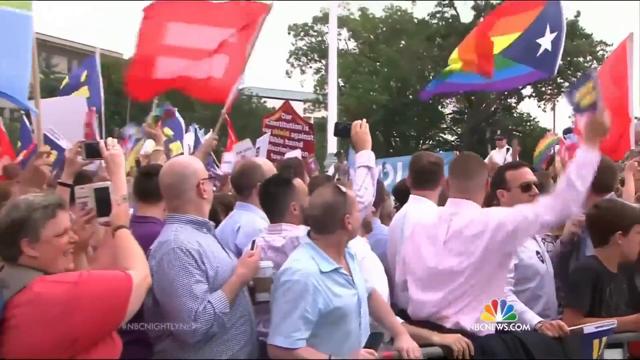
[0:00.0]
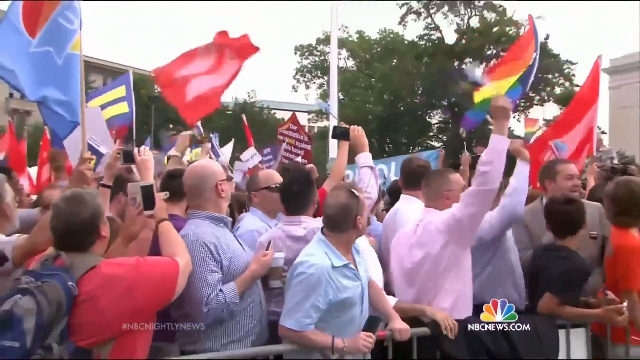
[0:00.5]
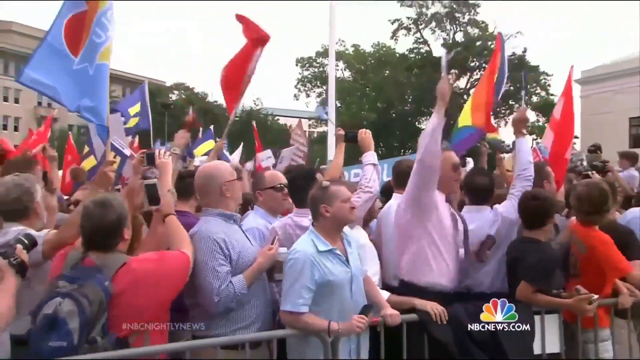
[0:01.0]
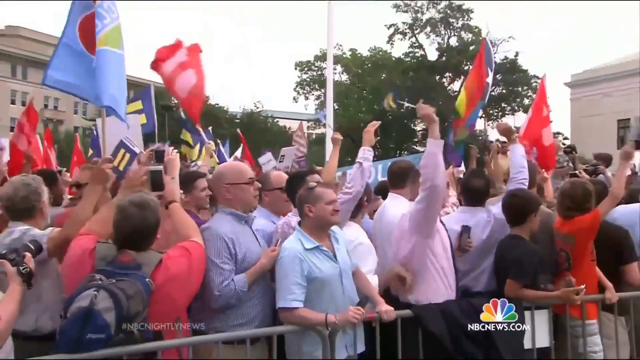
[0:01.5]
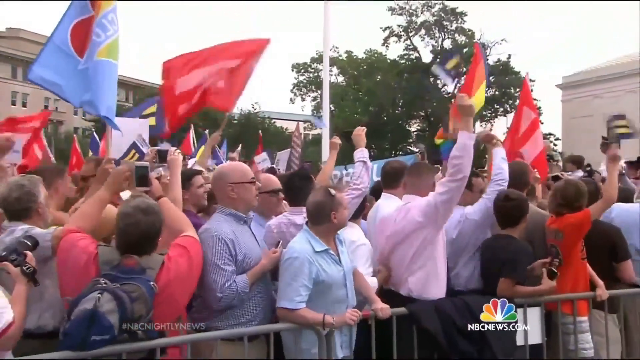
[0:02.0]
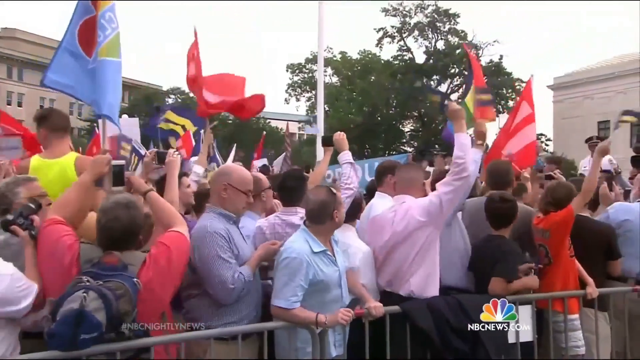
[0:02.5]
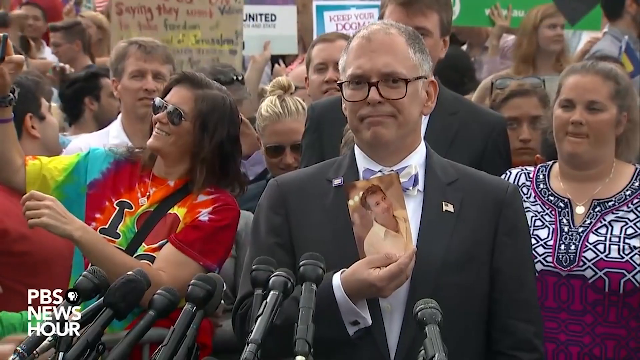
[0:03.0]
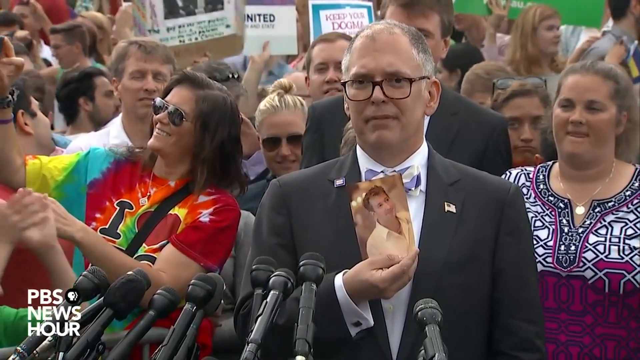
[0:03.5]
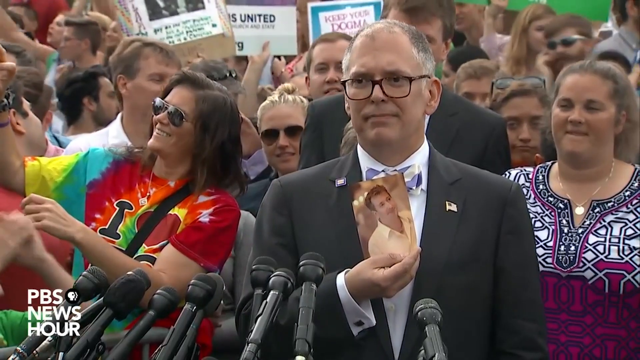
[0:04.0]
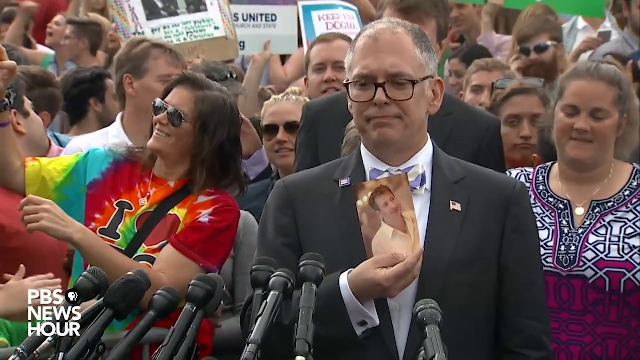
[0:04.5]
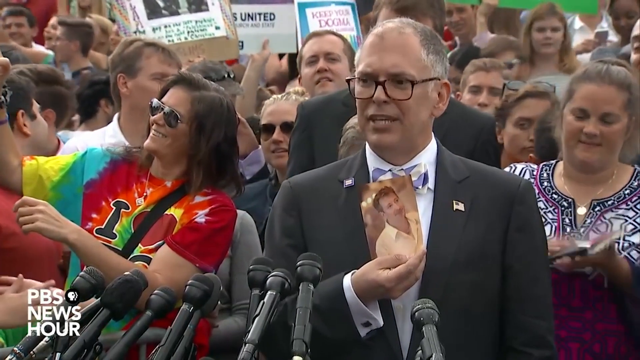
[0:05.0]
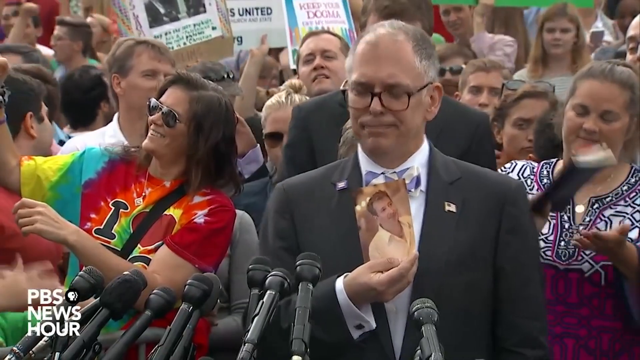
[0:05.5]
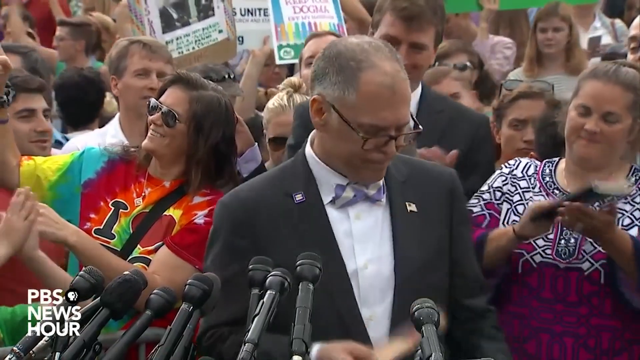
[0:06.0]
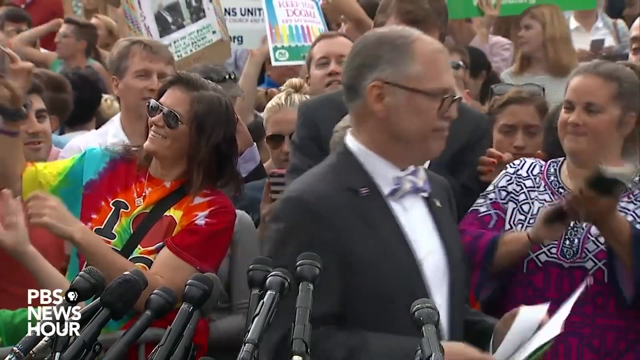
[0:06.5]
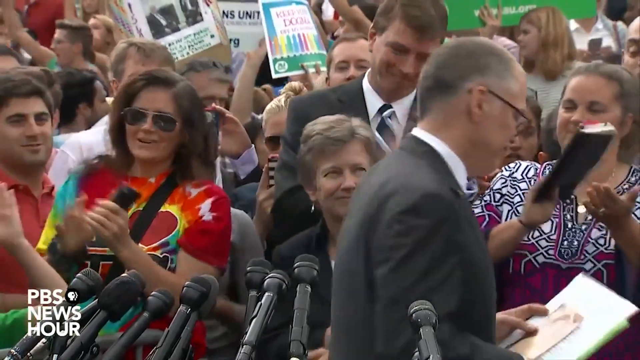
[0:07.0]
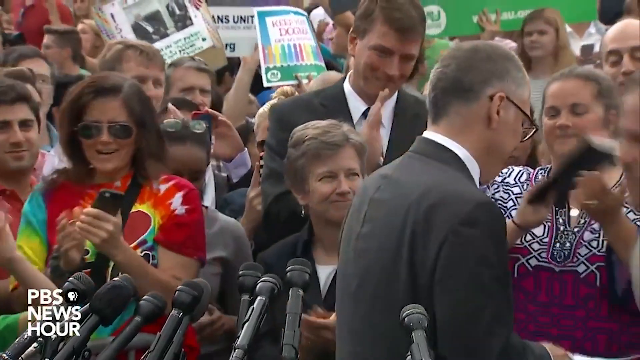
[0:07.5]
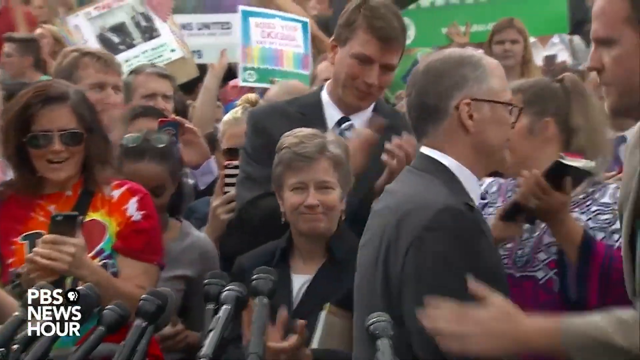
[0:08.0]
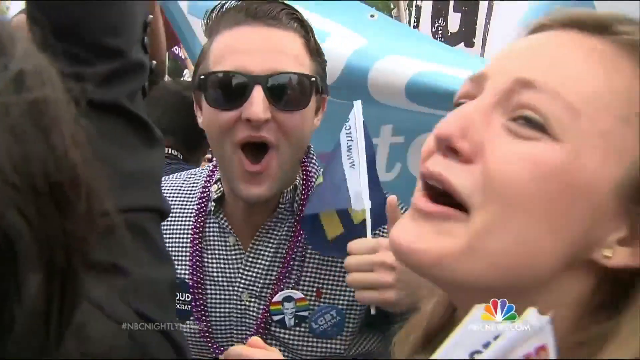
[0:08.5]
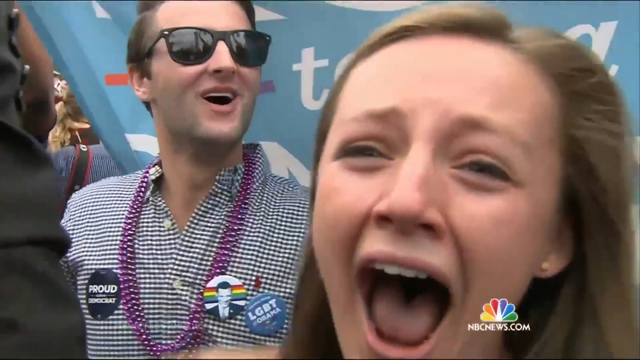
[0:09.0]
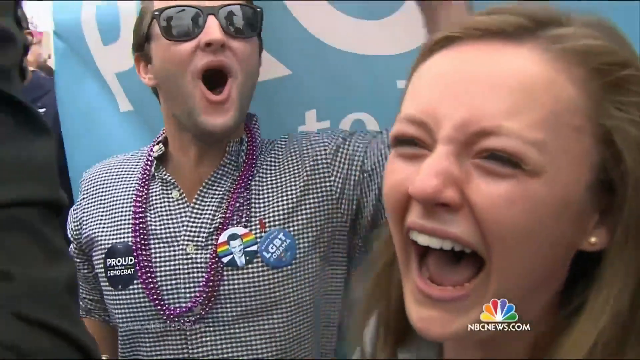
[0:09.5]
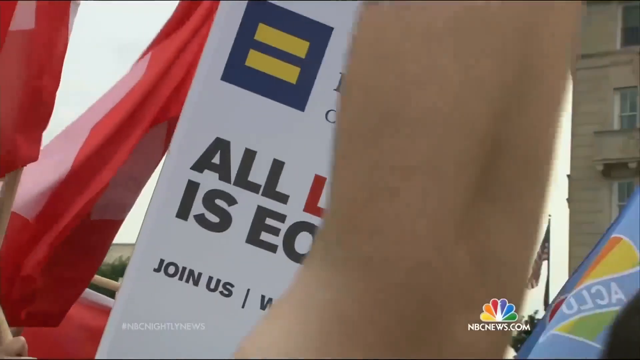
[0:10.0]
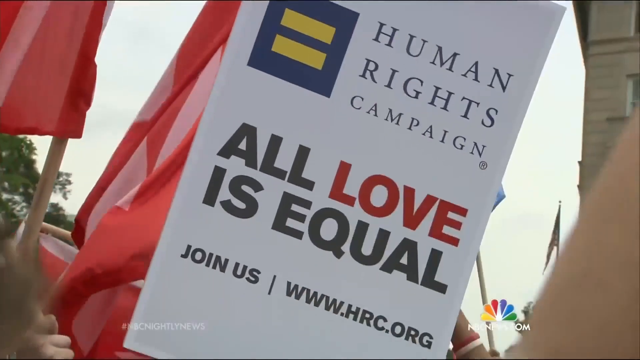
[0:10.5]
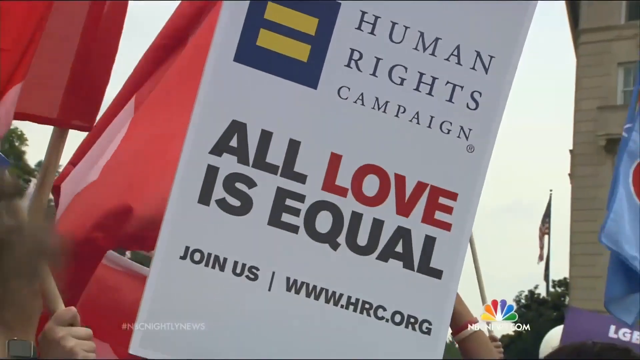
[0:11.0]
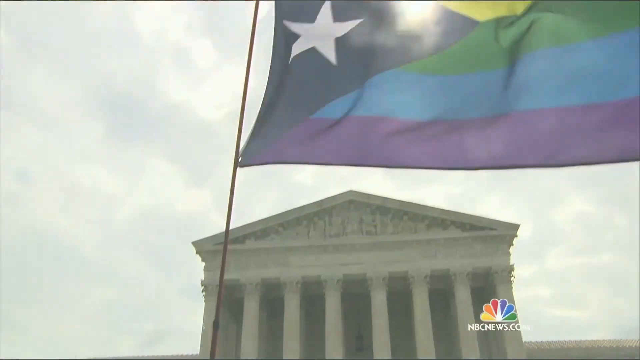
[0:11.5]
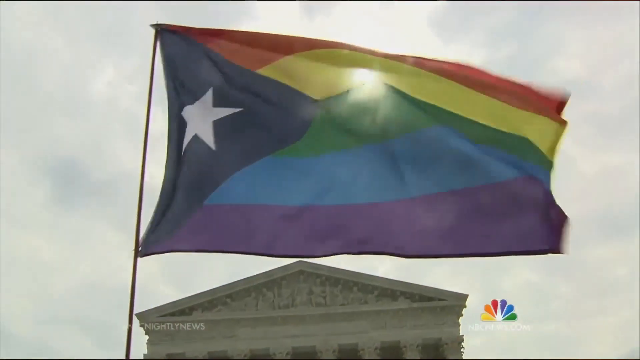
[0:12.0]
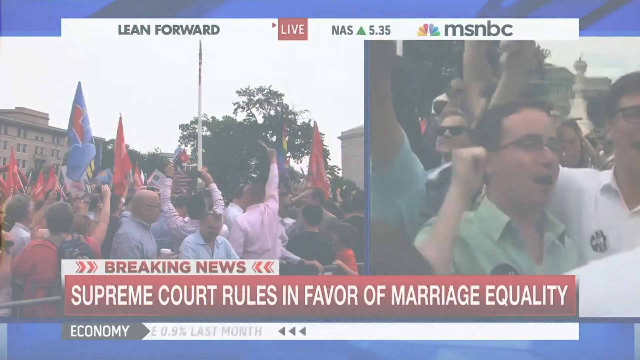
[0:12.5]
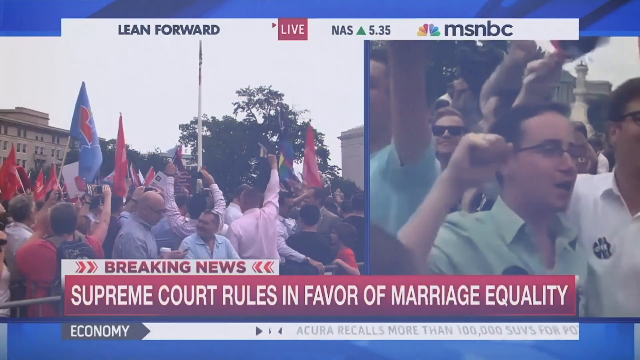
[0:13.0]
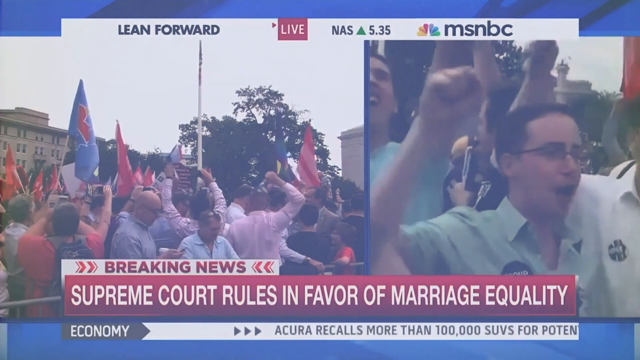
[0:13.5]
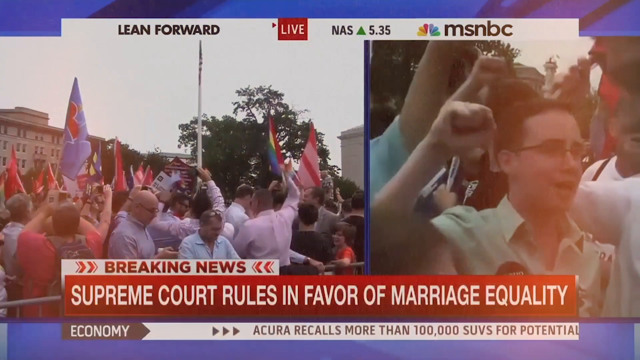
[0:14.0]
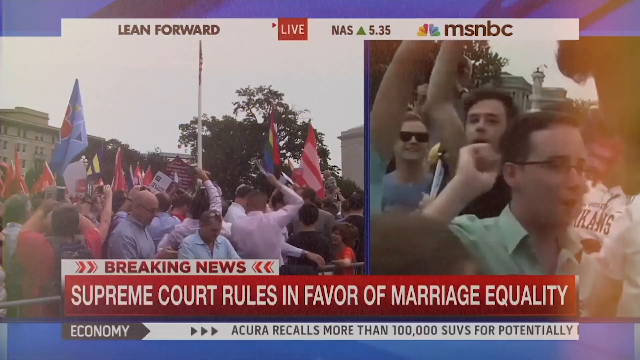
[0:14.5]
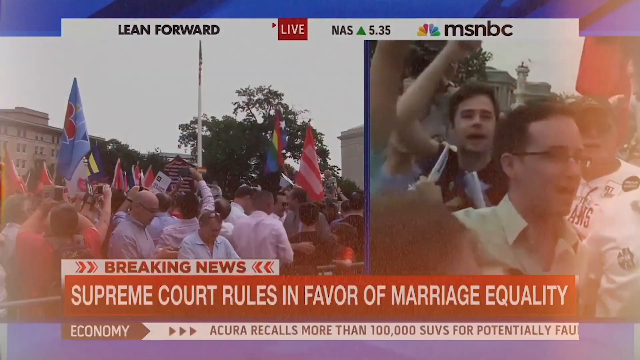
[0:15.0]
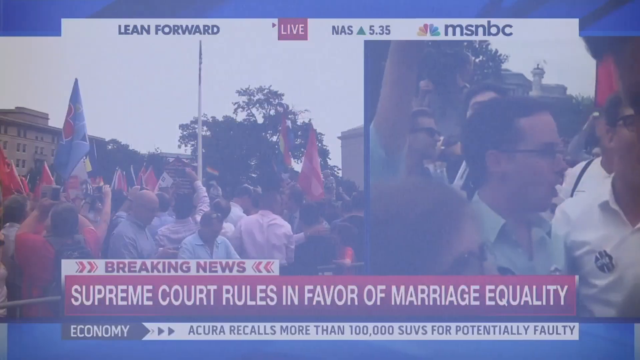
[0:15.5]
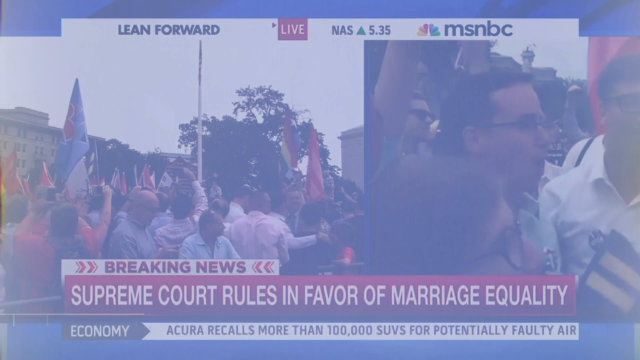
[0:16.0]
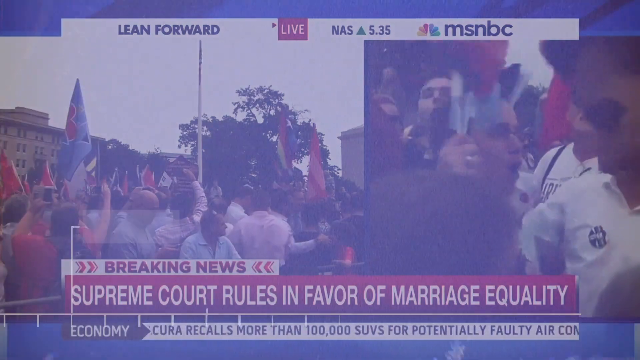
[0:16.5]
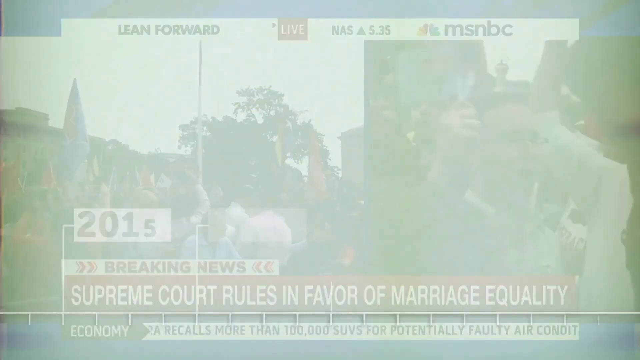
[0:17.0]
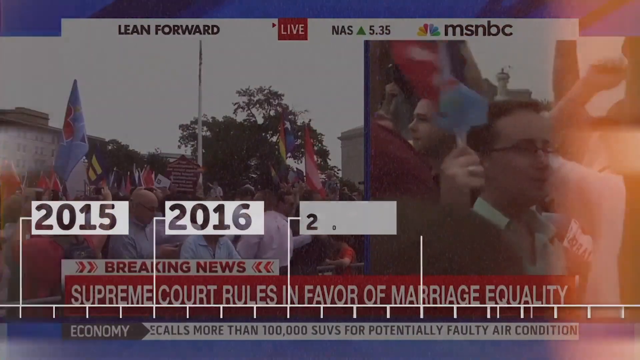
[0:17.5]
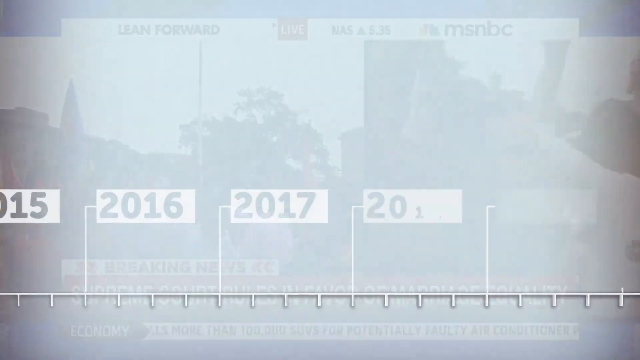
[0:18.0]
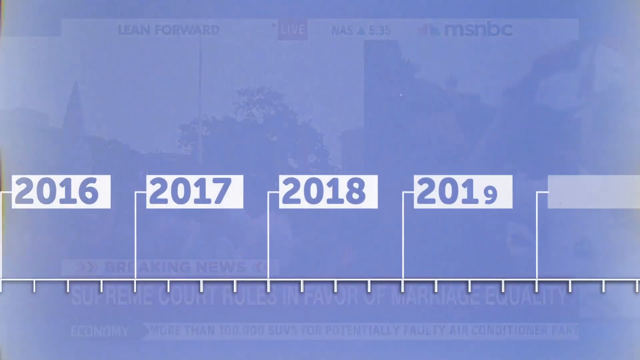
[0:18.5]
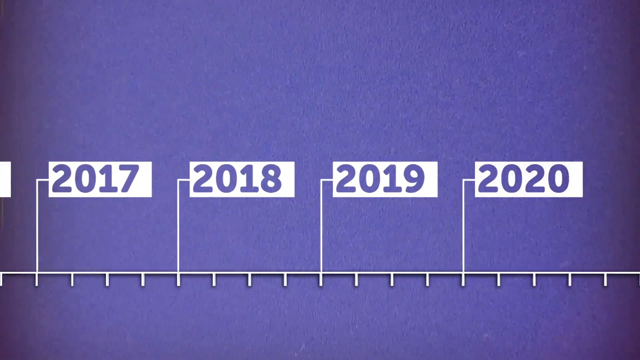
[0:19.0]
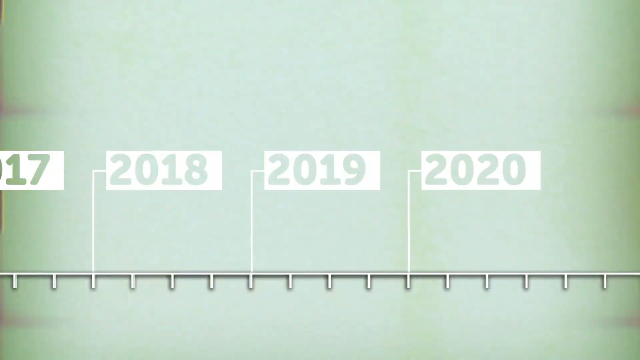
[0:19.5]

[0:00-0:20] People are protesting while carrying different flags, including a red flag with an equal sign on it and what appears to be a pride flag with a star at the front. A gathered group is protesting, screaming, dancing and jumping up and down. In front, microphones have been gathered or placed in a line. A man in front of one of the mics holds an image of what seems to be a young man. Next to him is a woman wearing a vibrant red t-shirt with colourful writing on it, and behind him is a woman who seems to be wearing a dress and seems to be clapping her hands; everyone else is excited. Text below reads "lean forward live," and the headline states "Supreme Court rules in favour of marriage equality."